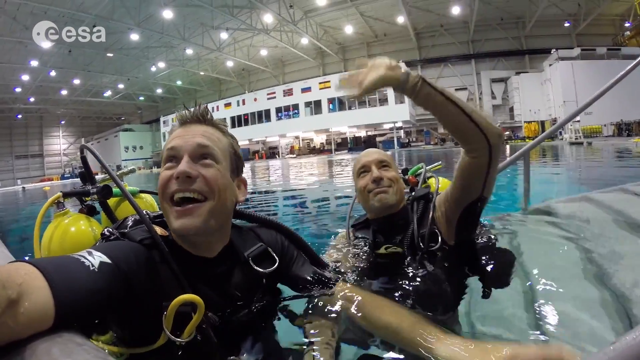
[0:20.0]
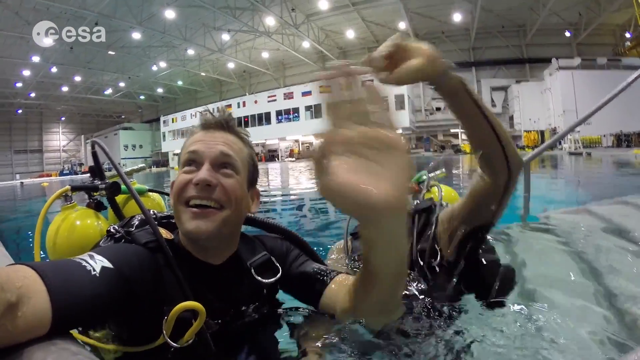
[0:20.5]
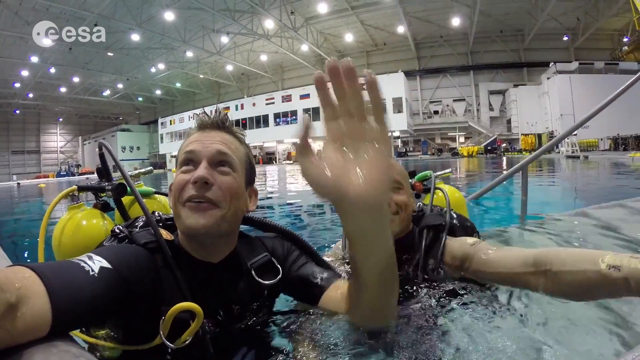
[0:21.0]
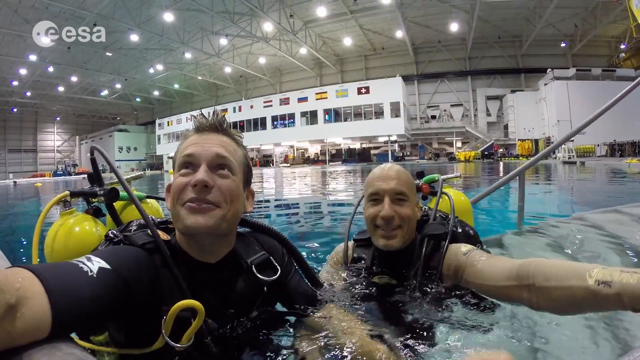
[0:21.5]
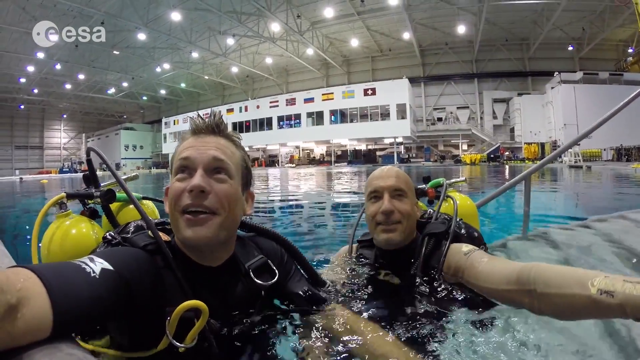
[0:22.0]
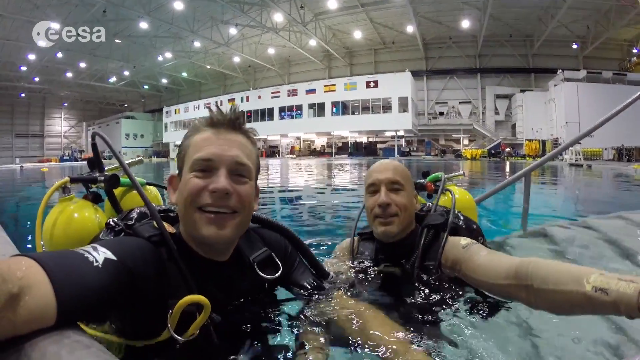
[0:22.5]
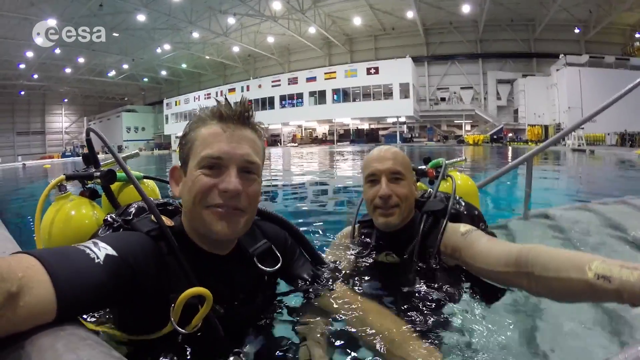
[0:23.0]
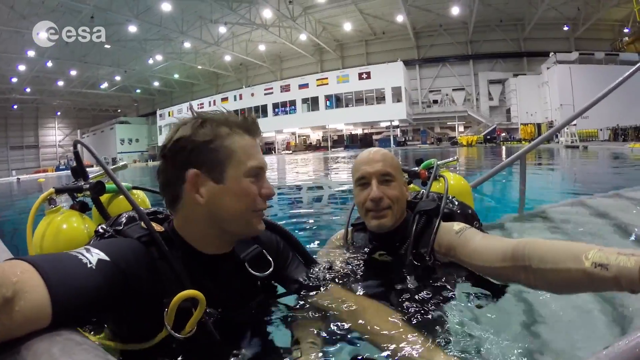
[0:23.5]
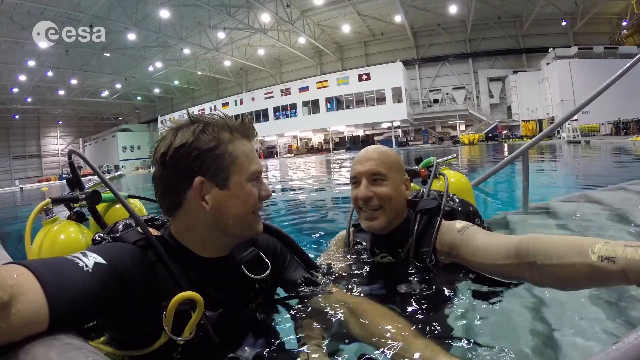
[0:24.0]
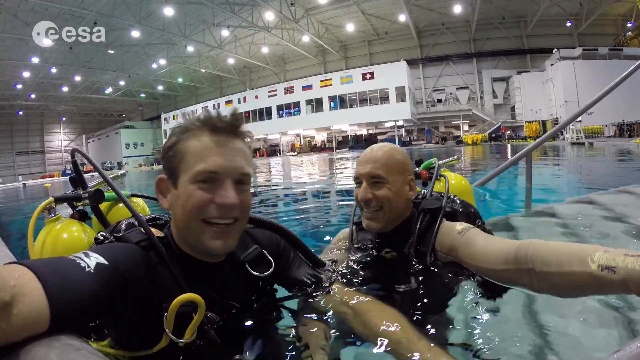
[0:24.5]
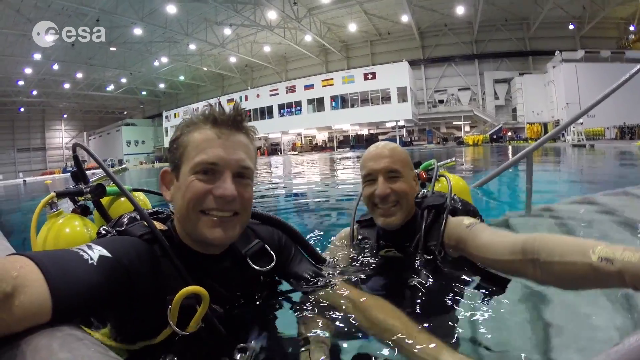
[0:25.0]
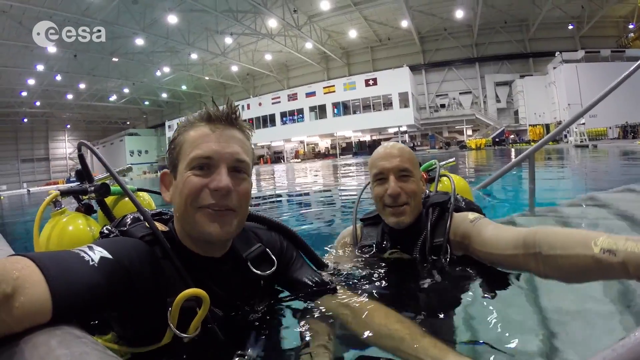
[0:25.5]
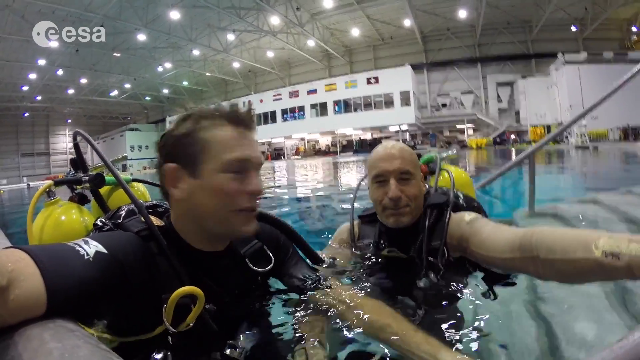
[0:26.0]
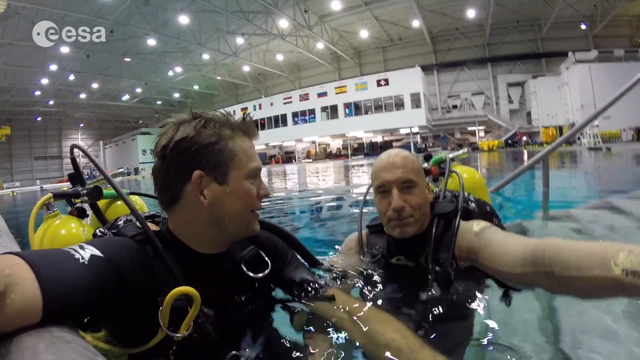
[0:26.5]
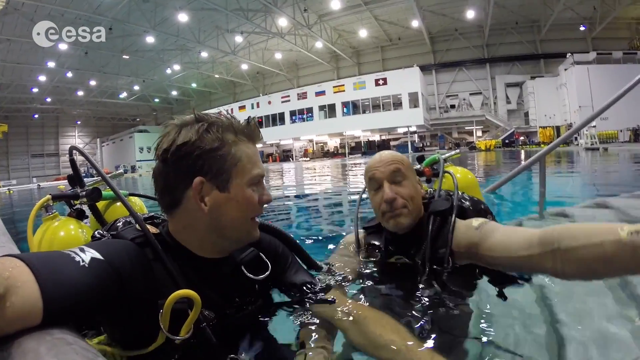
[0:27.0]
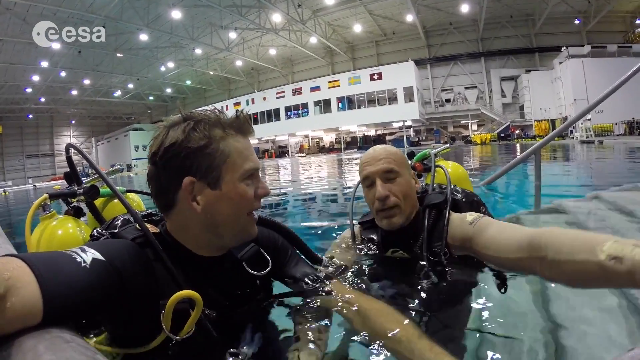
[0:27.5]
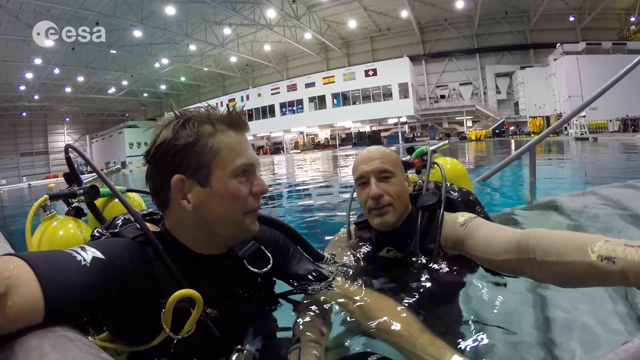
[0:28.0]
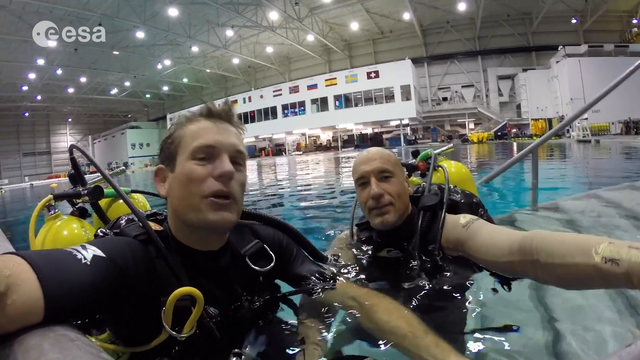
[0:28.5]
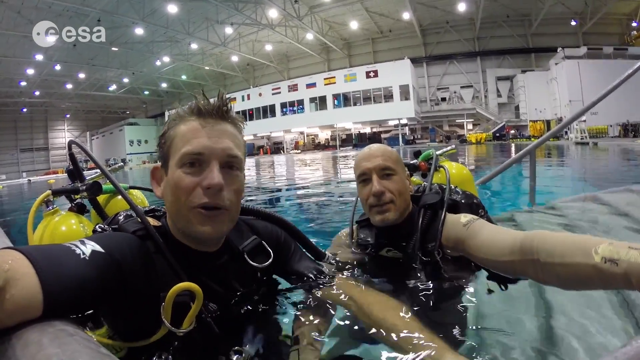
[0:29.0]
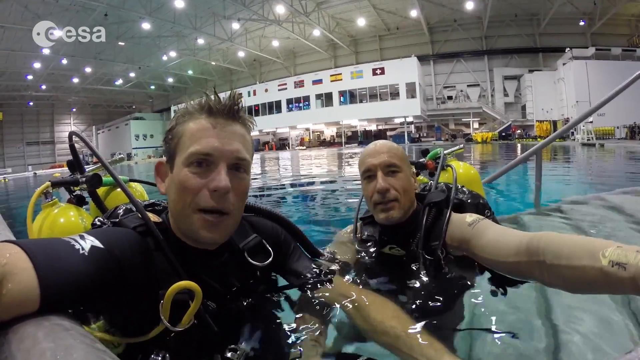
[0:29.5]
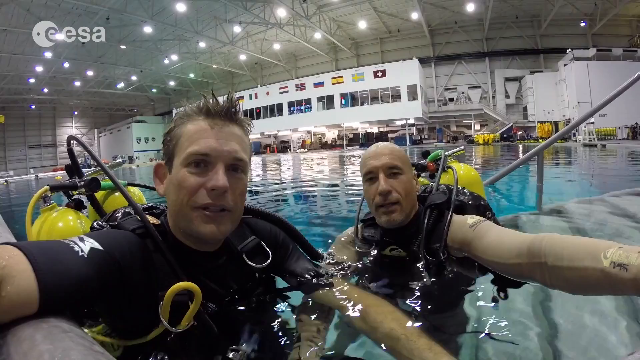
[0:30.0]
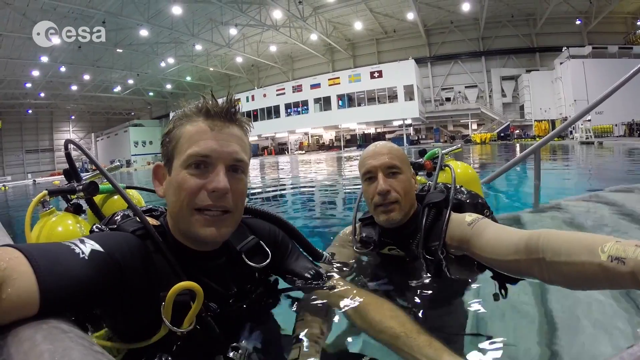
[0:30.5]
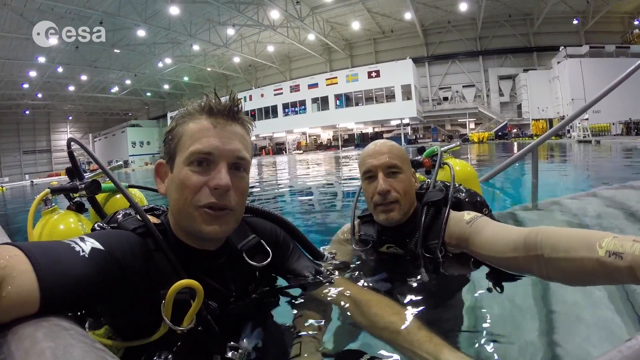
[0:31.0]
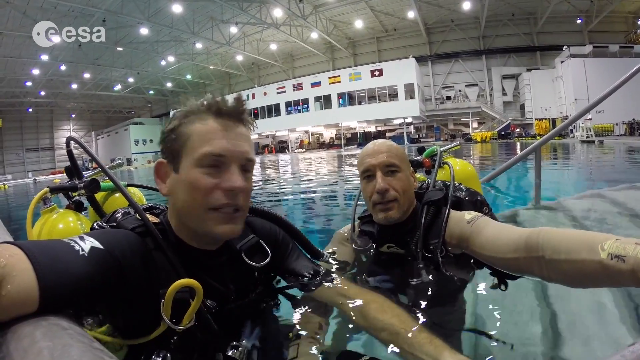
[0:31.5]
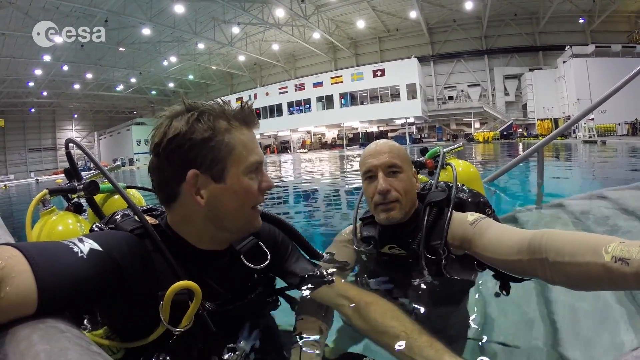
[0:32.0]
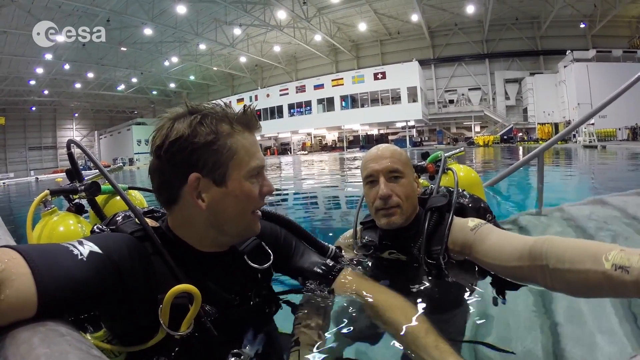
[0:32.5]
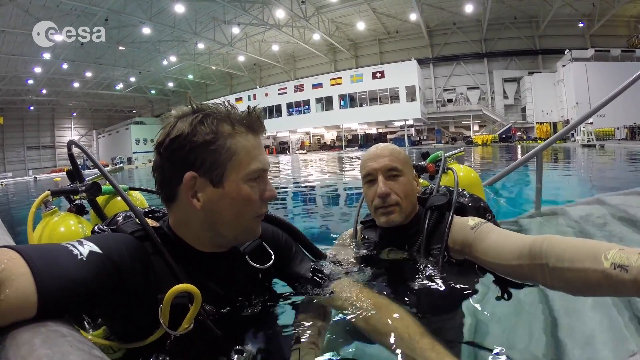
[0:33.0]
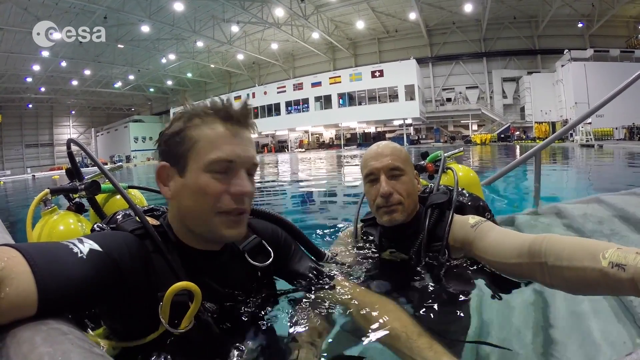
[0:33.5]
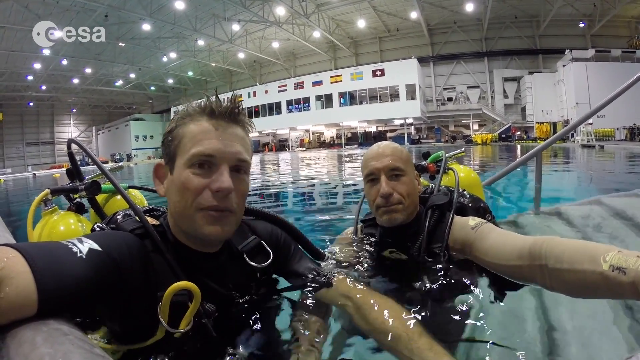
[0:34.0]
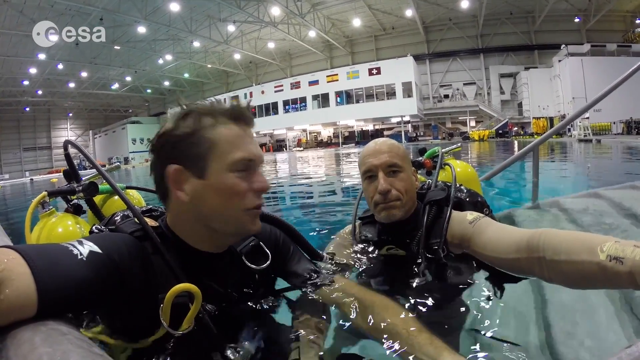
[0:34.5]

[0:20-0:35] The two men stand in the pool talking. The man on the viewer's left holds the camera, and the man to his right waves to the person off camera and smiles. They look at each other and laugh, then nod to each other, talking and apparently describing something. They wear wetsuits and scuba tanks, which are yellow. The pool is very large, apparently the size of many Olympic-sized pools, and seems to be inside a huge warehouse or airport-hangar-sized space, with the pool filling most of the view. Far off behind them, on the other side of the pool, is an almost building-like second story, too distant for anything on its outside to be read. The men stand in the water by the stairs that lead into the pool, not in the center, and do not go further into the pool.